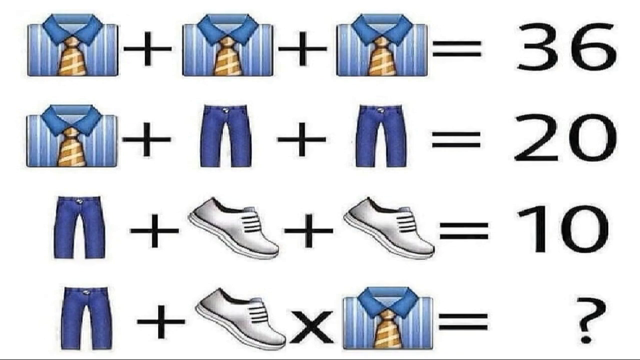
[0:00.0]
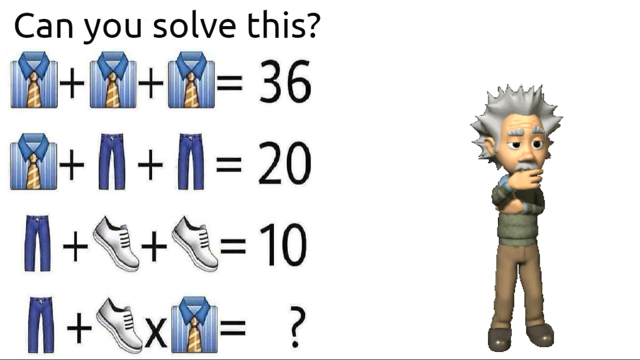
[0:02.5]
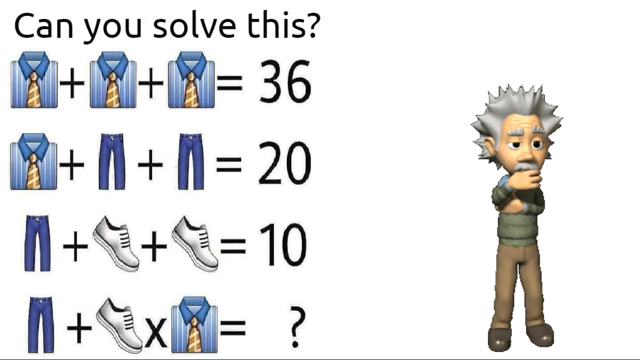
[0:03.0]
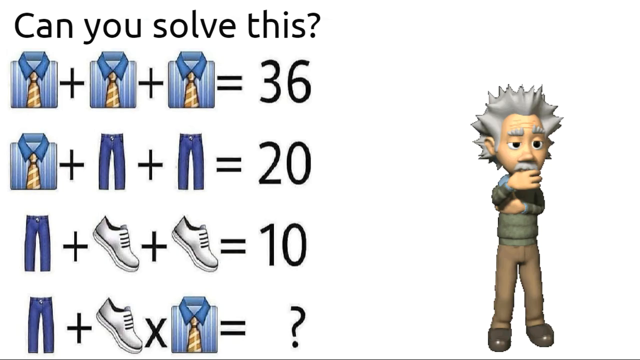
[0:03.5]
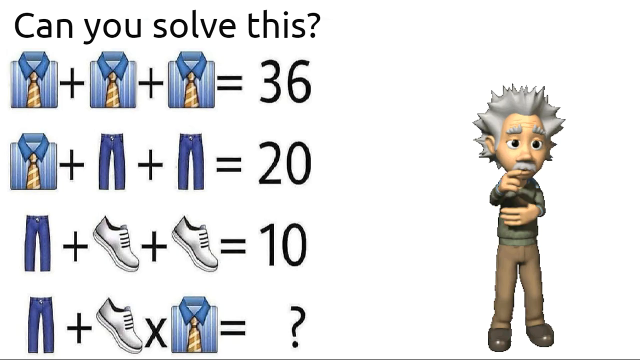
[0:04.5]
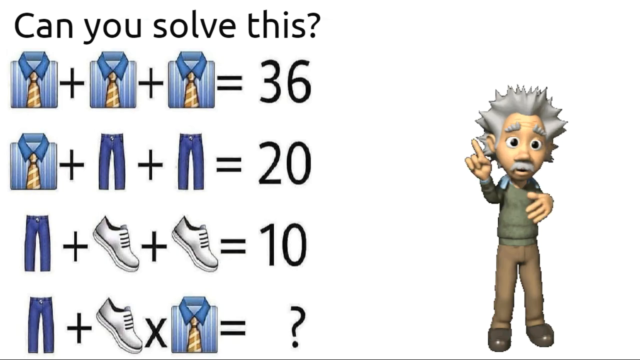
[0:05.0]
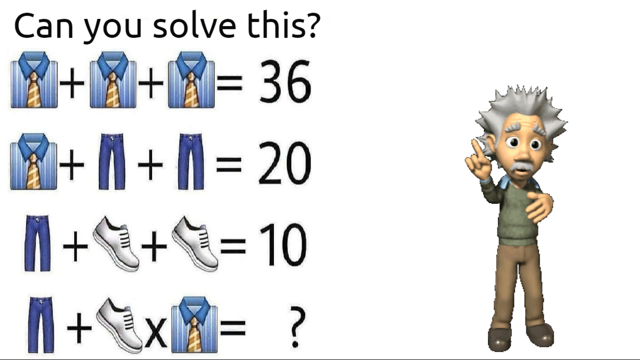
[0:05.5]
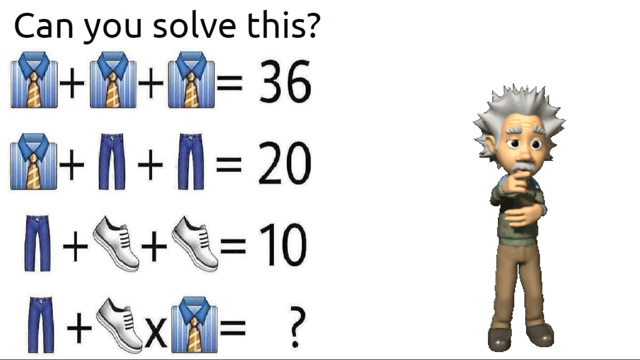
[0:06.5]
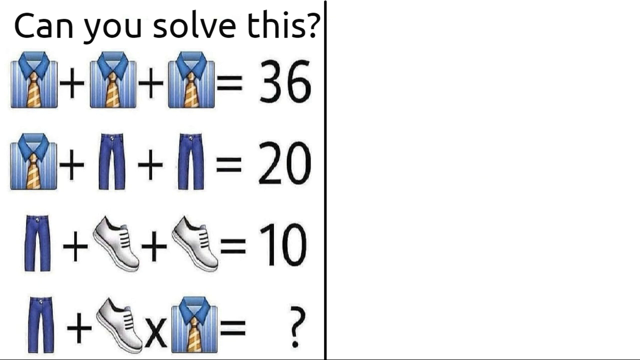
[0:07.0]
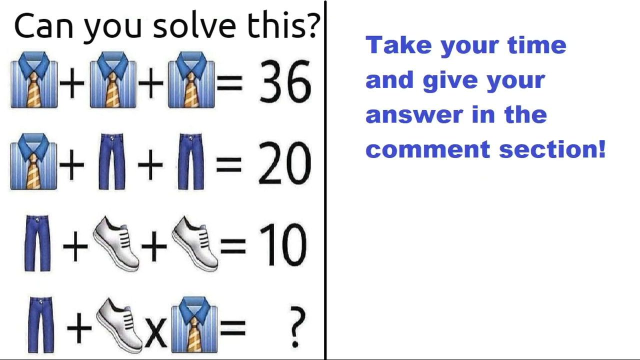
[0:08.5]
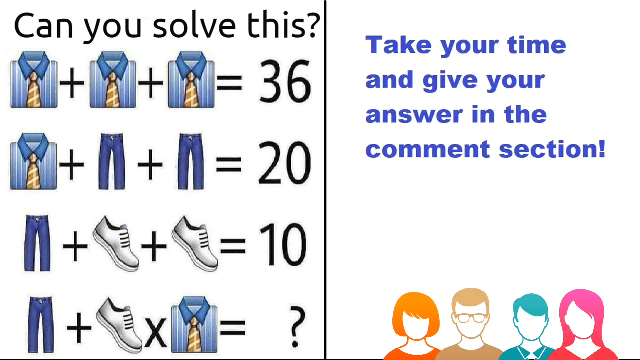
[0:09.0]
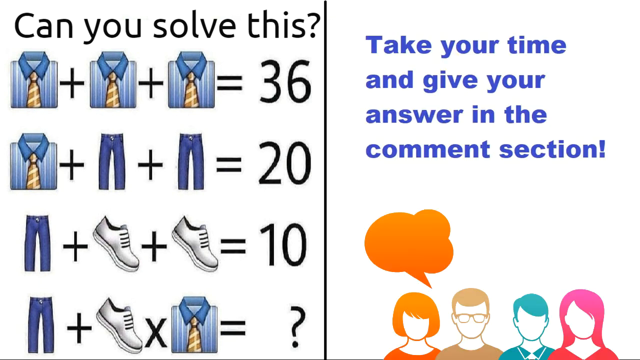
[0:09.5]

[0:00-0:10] Four equations appear, one on top of the other. The first is one striped shirt plus one striped shirt plus one striped shirt equals 36. The second is one striped shirt plus one pants plus one pants equals 20. The third is one pants plus one shoe plus one shoe equals 10. The last is one pants plus one shoe times one striped shirt equals question mark. The screen then splits into two: the equations move to the left side with the question "Can you solve this?" as the heading, and on the right side a computer-animated version of Albert Einstein appears in deep thought, arms crossed, one hand rubbing his chin. Eventually he points his finger up toward the sky, as if to indicate that he has figured it out. The screen is then split again, this time with a line in the middle. The Einstein figure disappears and is replaced by the phrase "Take your time and give your answer in the comment section." Below the phrase, four heads appear; from left to right they are a female in orange, a man with glasses in yellow, a boy in turquoise, and a female head in pink. A speech bubble appears above the orange female head, and then above the pink female head.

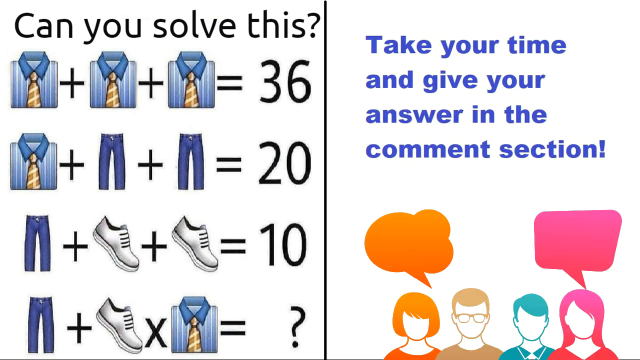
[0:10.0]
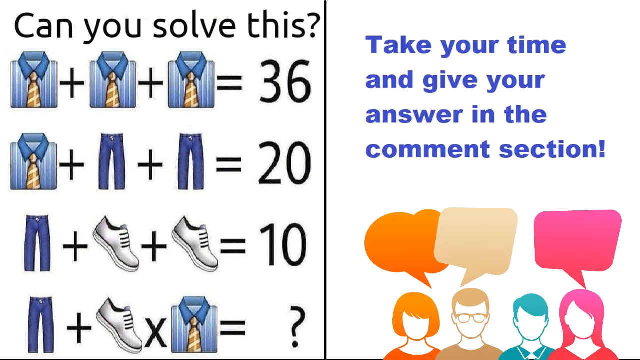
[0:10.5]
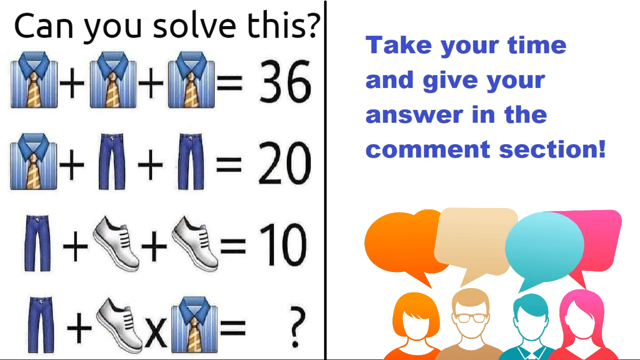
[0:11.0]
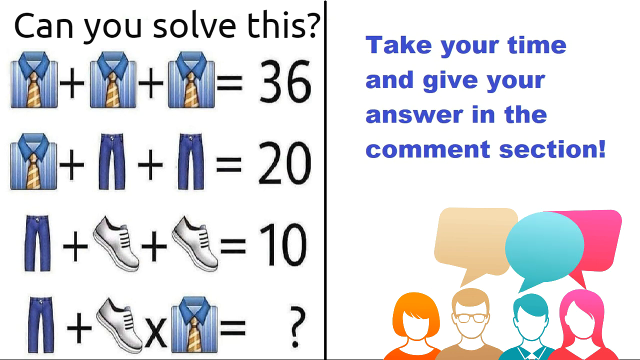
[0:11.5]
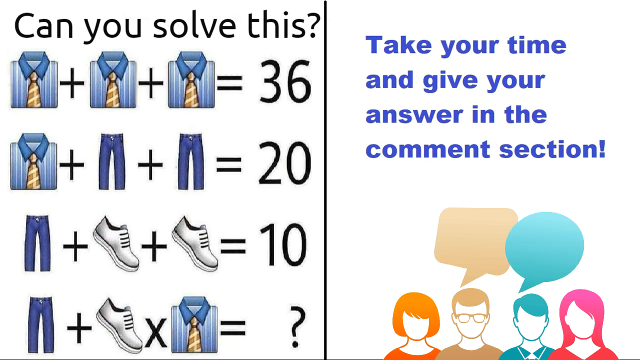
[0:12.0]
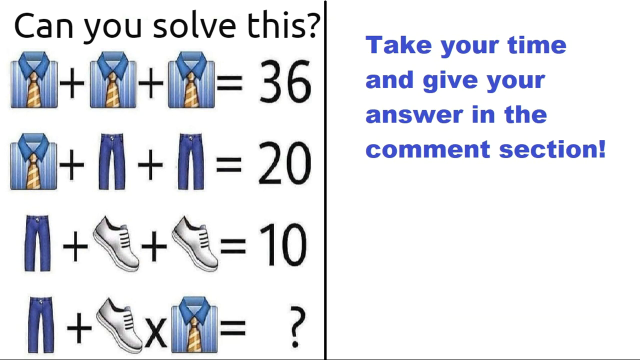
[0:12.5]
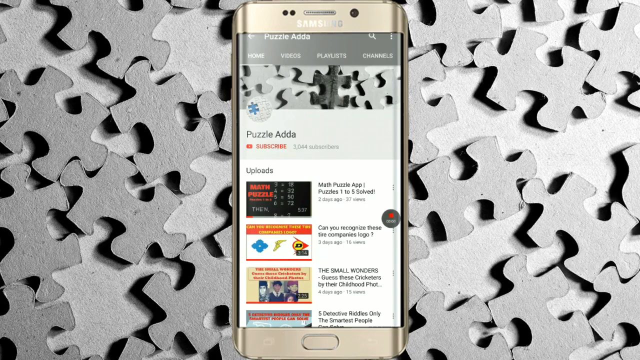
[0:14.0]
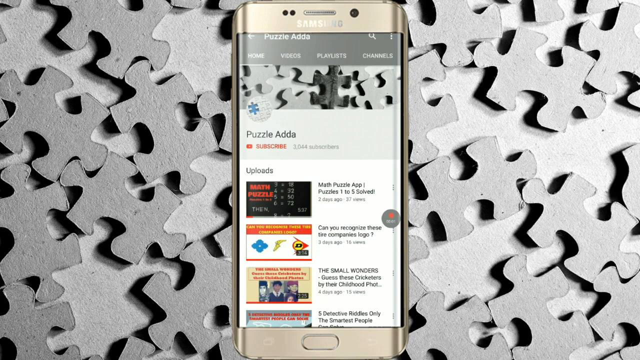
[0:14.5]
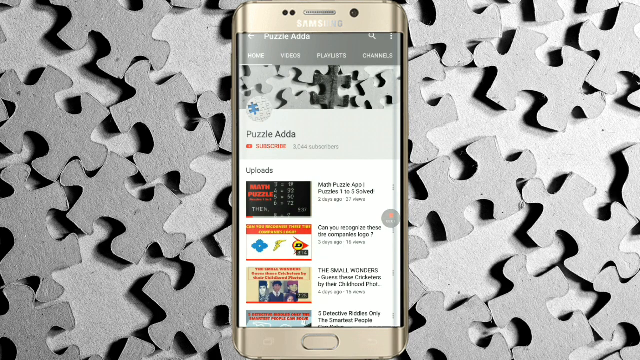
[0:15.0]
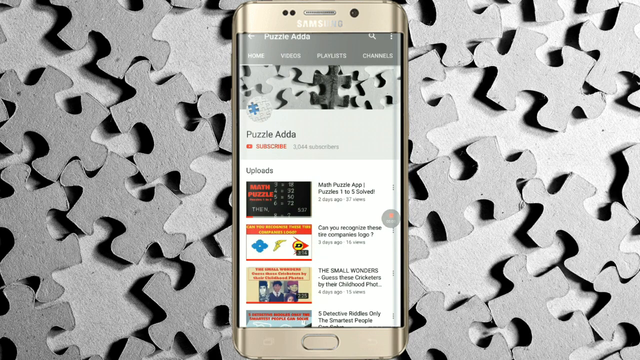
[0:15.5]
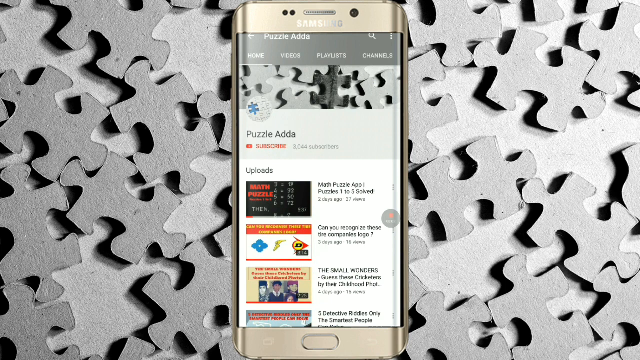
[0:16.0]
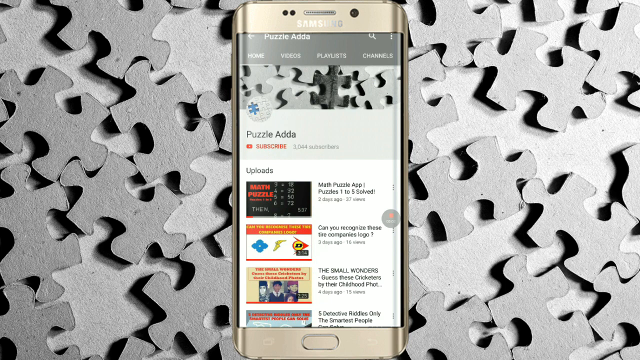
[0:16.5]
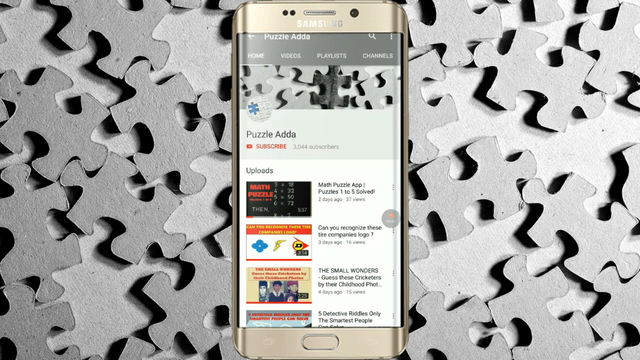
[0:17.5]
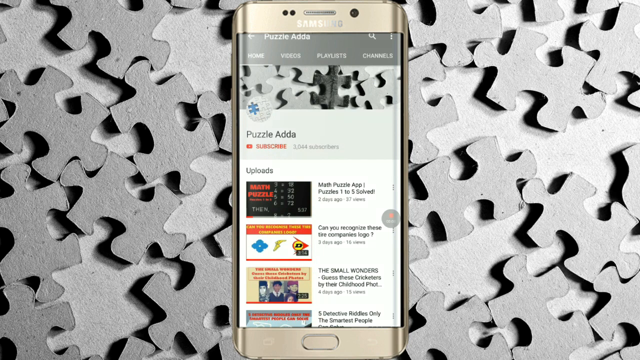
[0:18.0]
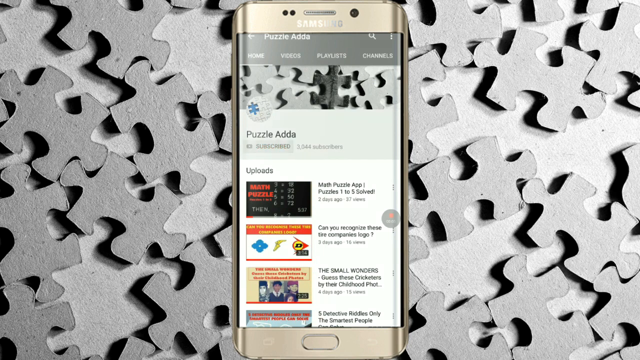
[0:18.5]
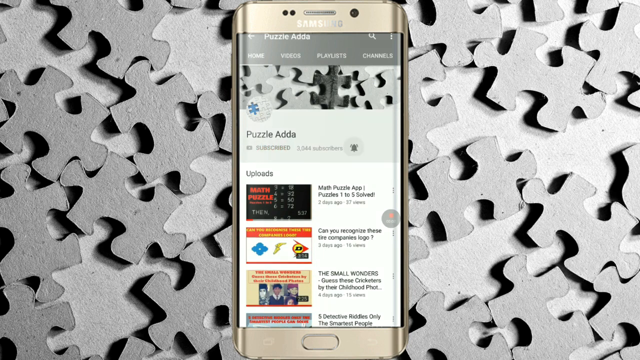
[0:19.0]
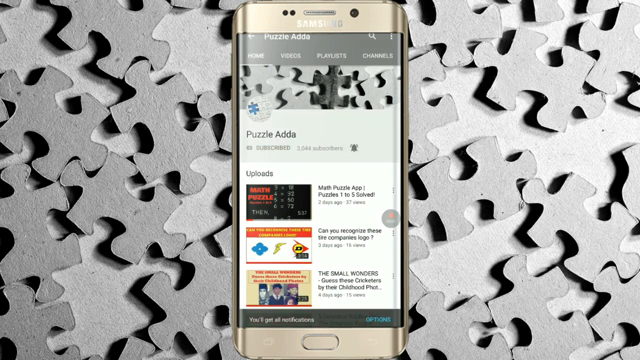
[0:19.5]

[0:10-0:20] A speech bubble appears on the man's head, which turns out to be brown, and then above the turquoise head. Immediately afterwards the speech bubbles disappear, first from the orange head, then from the pink head, and finally all the heads disappear. The scene switches to a Samsung phone in the middle, with a number of grey puzzle pieces scattered in the background. The pieces are all flat and touch one another, but none is on top of another. The phone shows an app called Puzzle Ada, with uploads of a couple of clips on it.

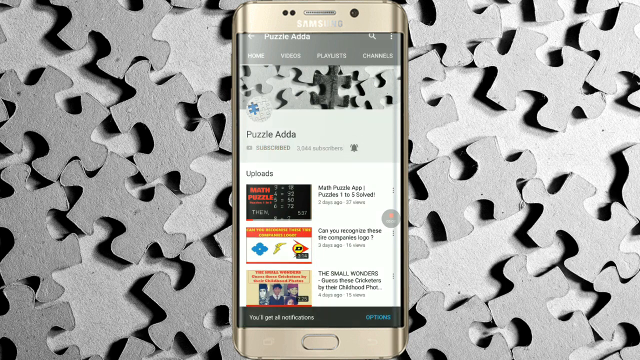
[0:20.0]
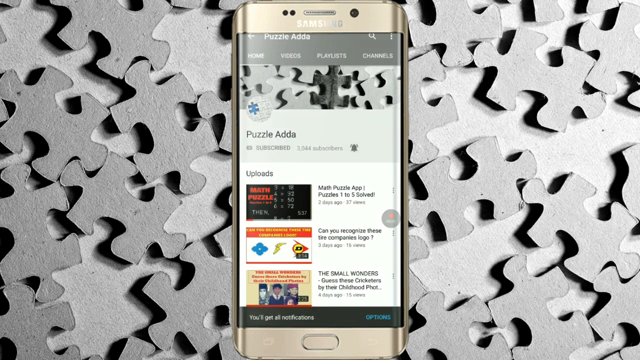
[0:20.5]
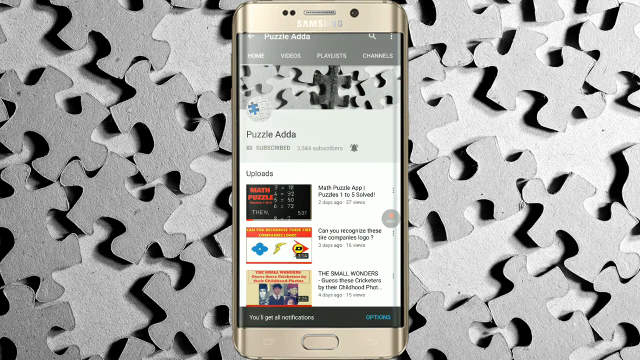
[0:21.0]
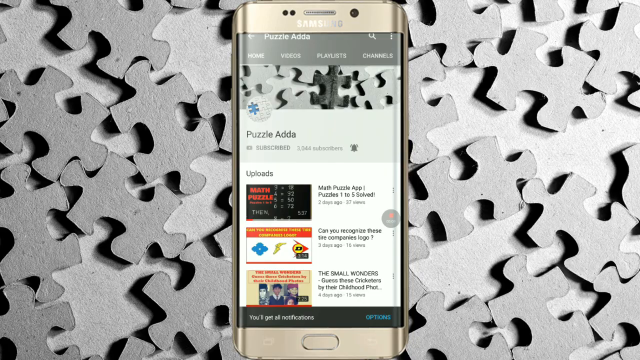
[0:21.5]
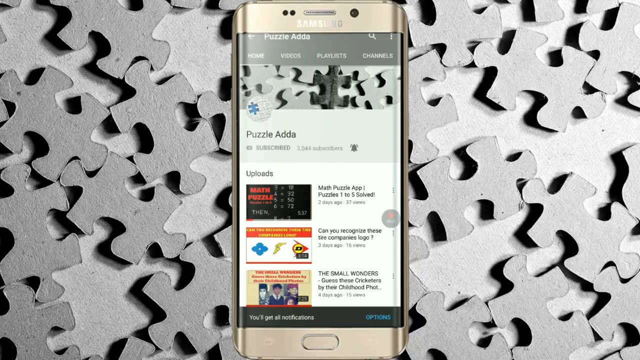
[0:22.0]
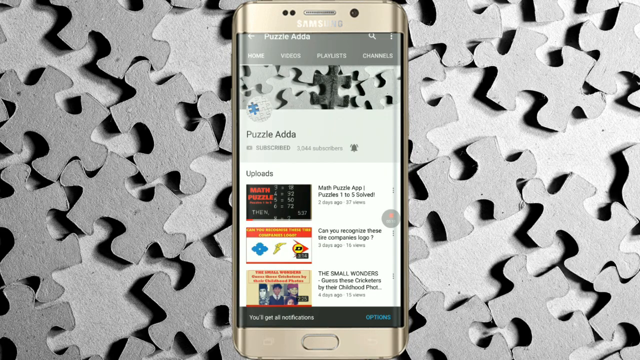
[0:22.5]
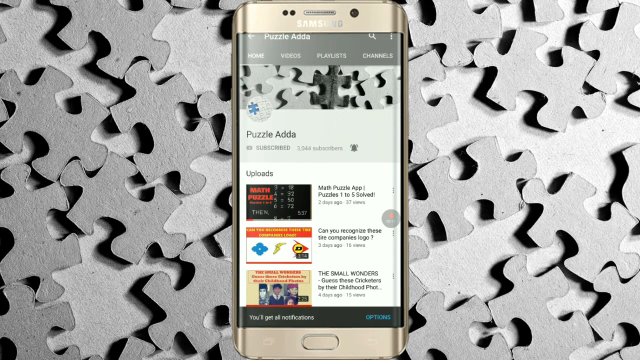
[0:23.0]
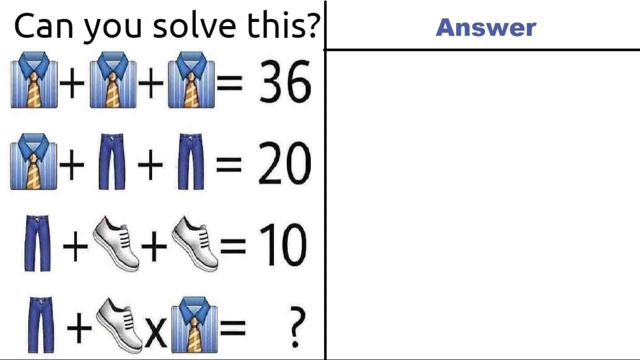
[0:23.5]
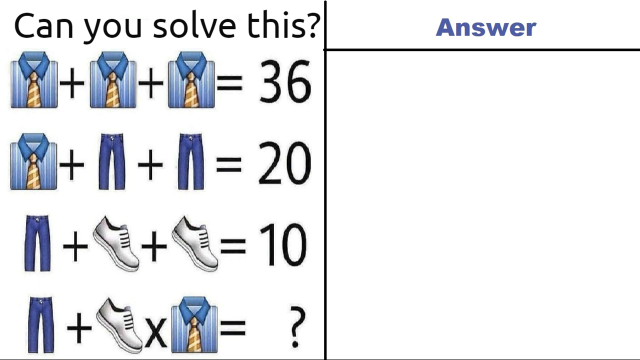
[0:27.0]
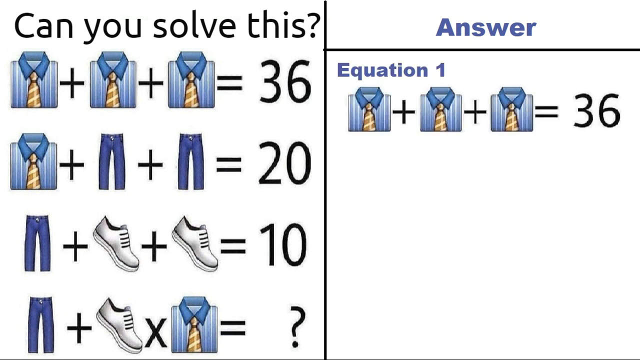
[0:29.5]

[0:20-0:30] The scene with the Samsung phone in the middle stays for about three seconds, then the video switches back to the equation scene. The equation is on the left of the screen with the heading "Can you solve this?" on top. A vertical black line splits the middle of the screen, and on the right side the title reads "Answer", bolded and in dark navy blue. A horizontal black line splits the area beneath it, and the first equation, one striped shirt plus one striped shirt plus one striped shirt equals 36, appears below that line.